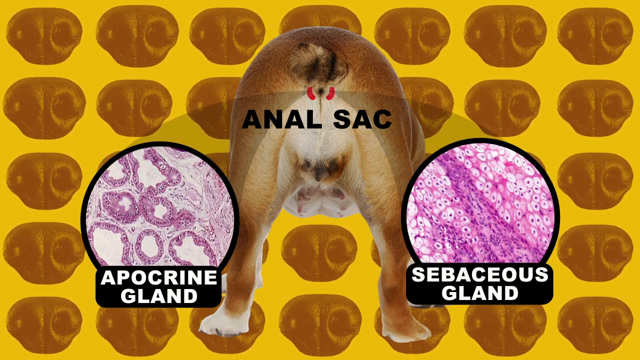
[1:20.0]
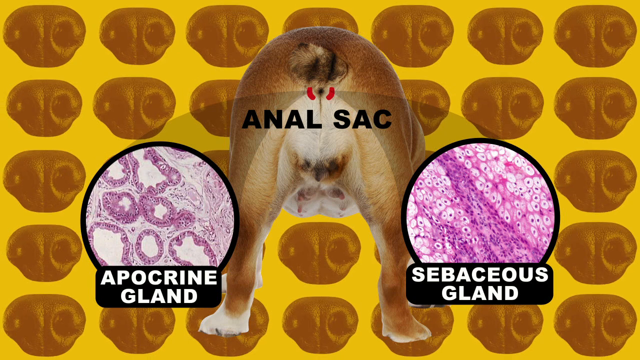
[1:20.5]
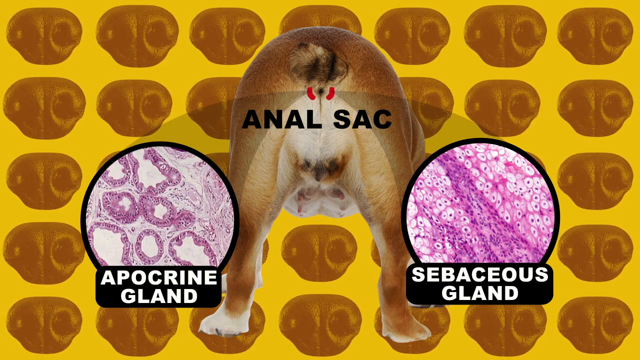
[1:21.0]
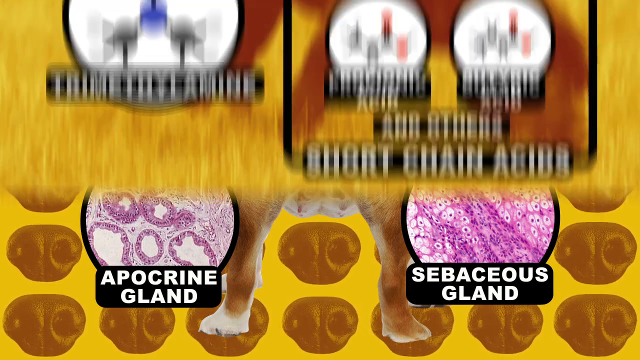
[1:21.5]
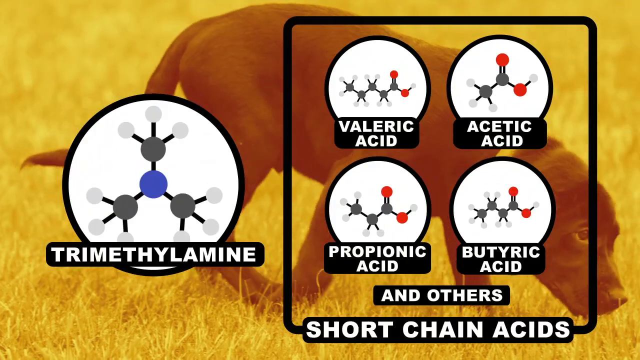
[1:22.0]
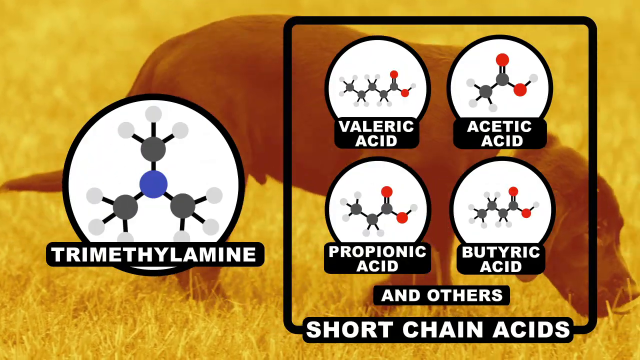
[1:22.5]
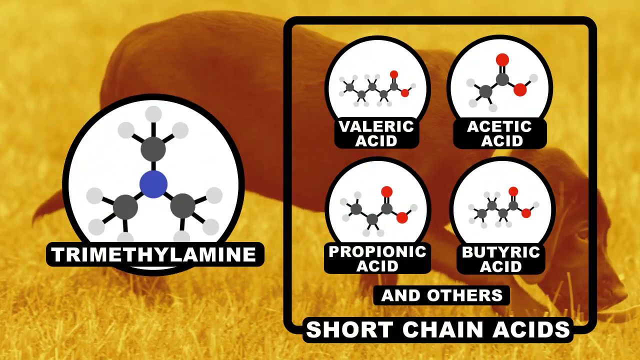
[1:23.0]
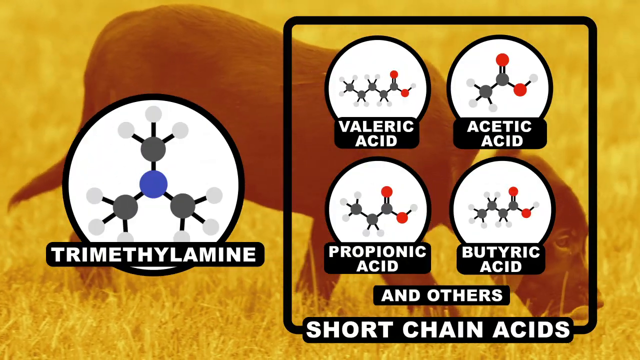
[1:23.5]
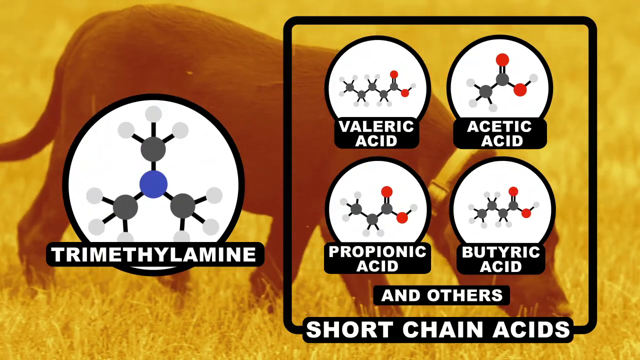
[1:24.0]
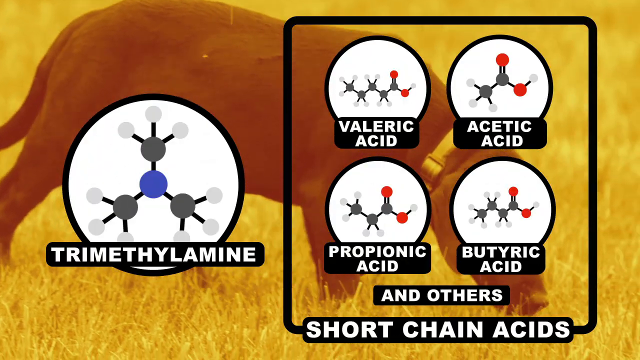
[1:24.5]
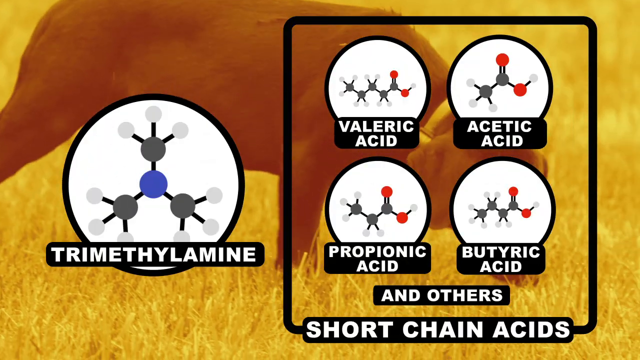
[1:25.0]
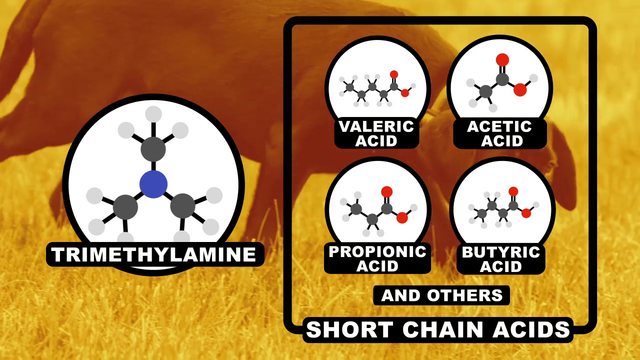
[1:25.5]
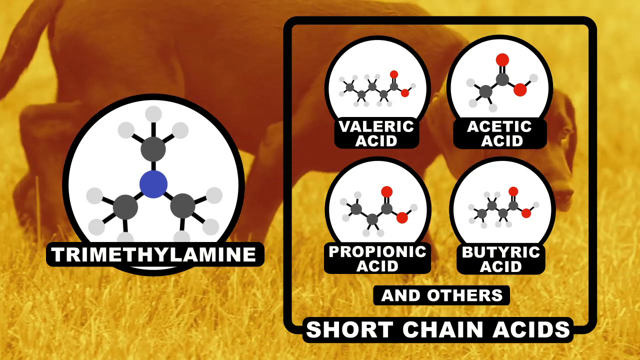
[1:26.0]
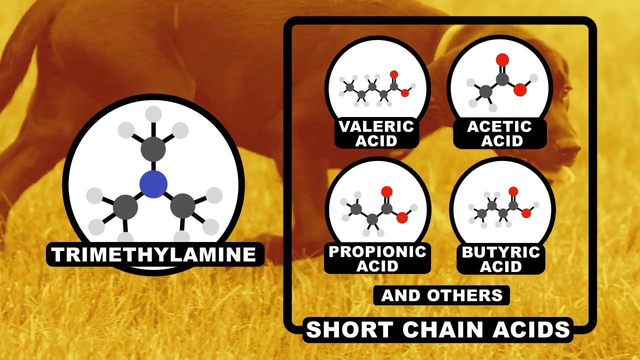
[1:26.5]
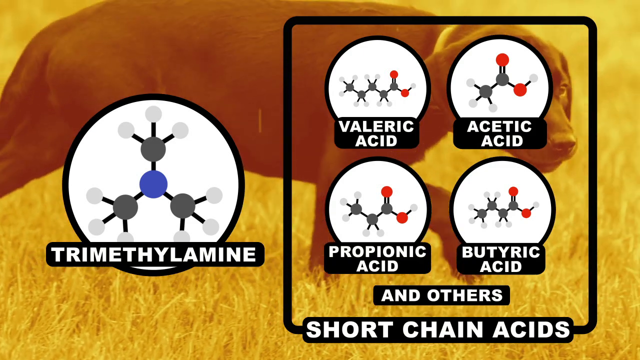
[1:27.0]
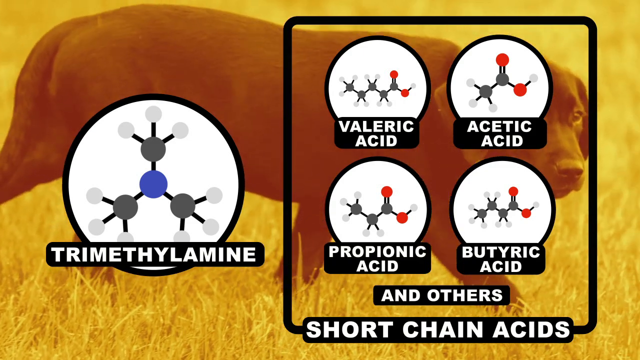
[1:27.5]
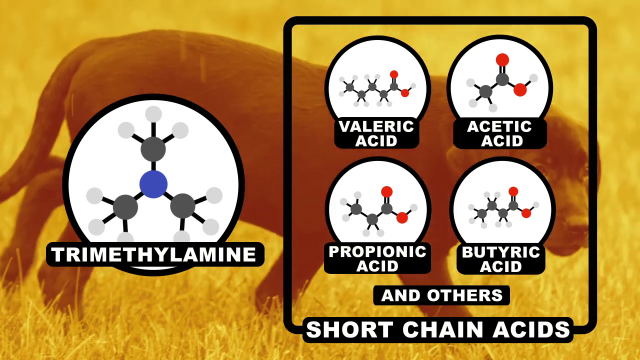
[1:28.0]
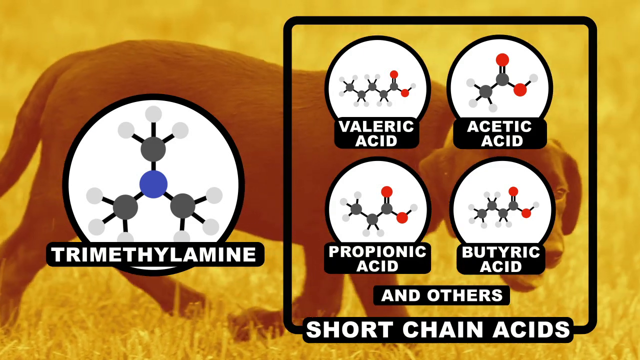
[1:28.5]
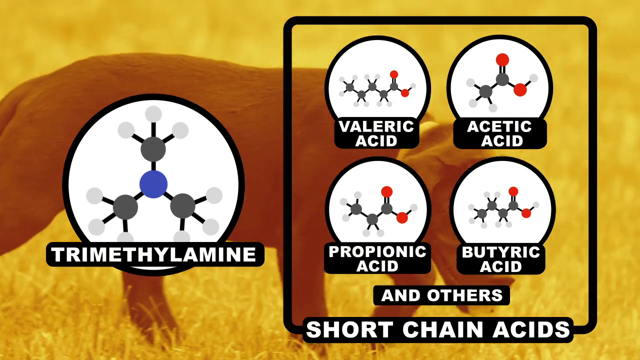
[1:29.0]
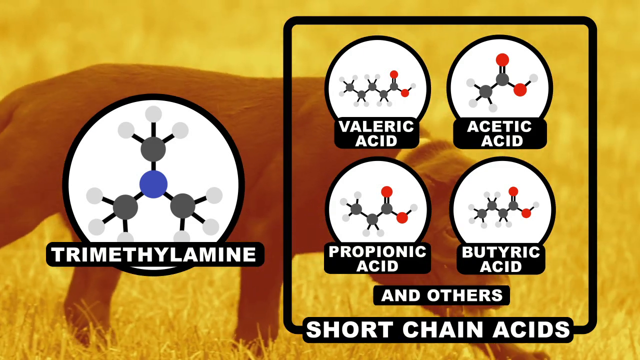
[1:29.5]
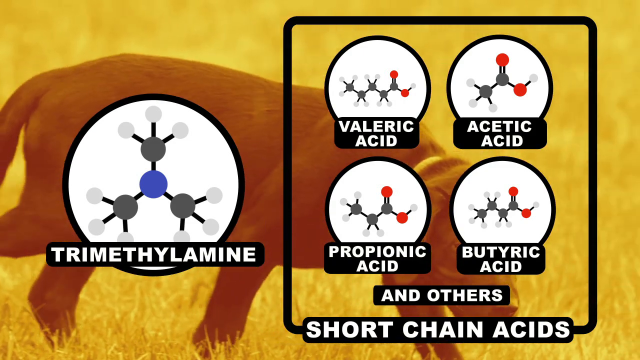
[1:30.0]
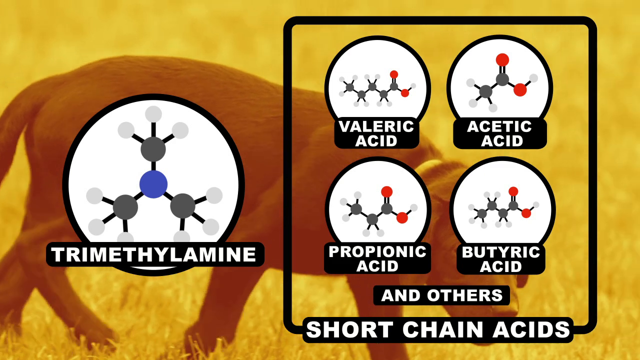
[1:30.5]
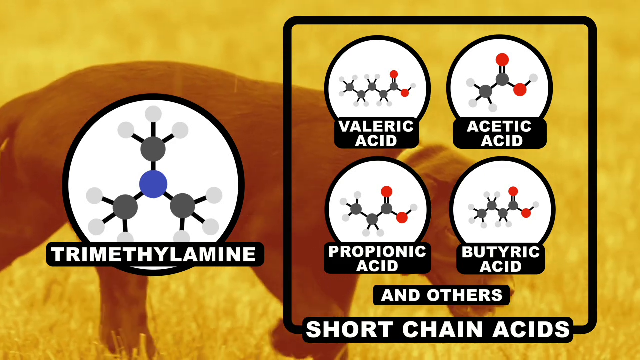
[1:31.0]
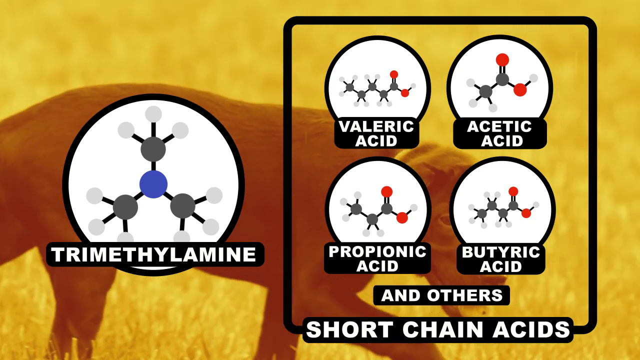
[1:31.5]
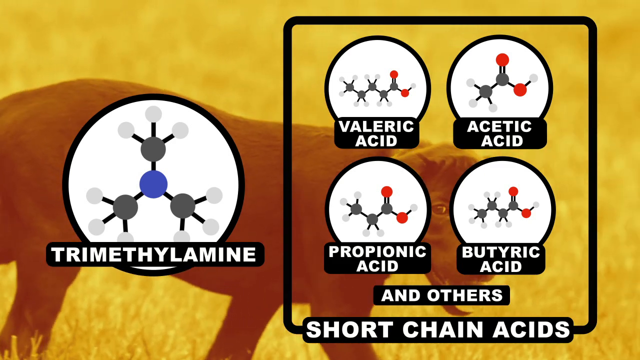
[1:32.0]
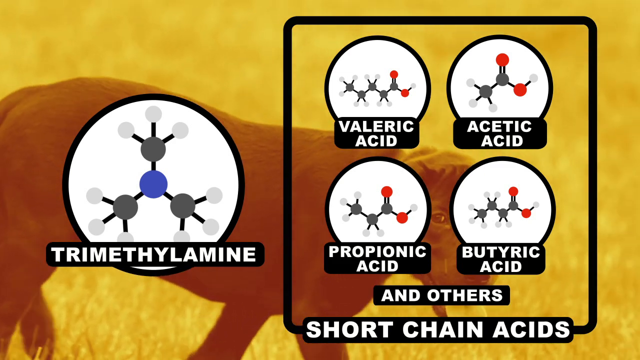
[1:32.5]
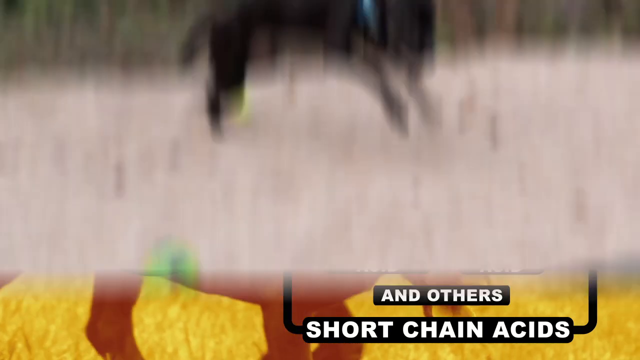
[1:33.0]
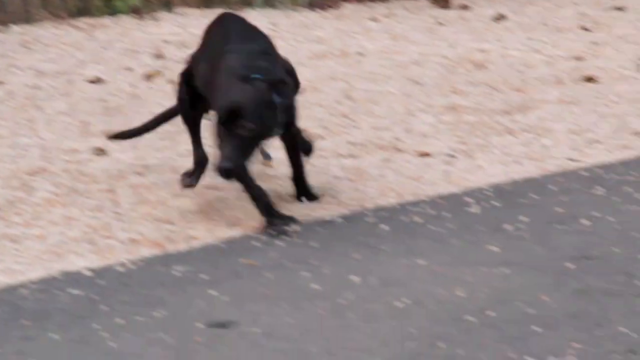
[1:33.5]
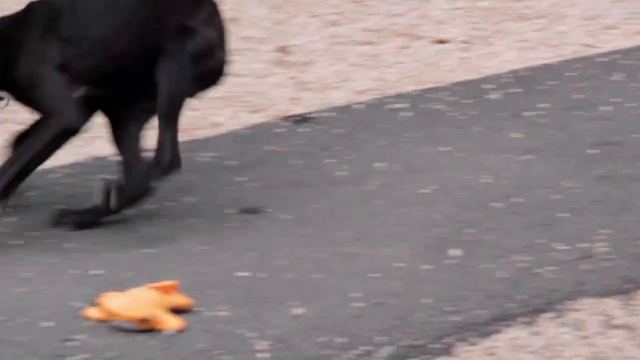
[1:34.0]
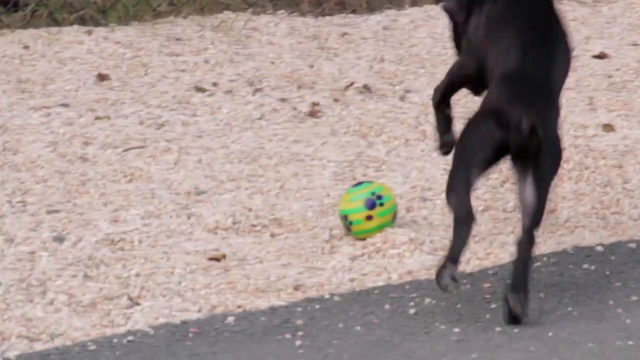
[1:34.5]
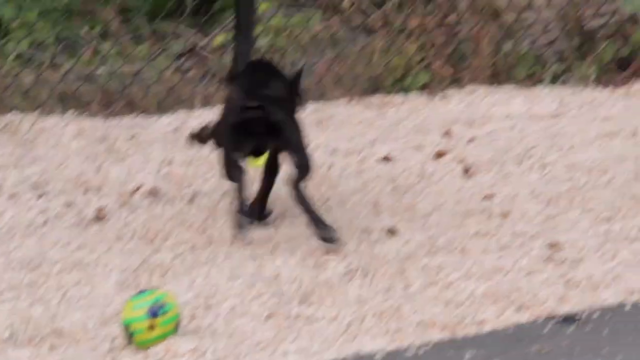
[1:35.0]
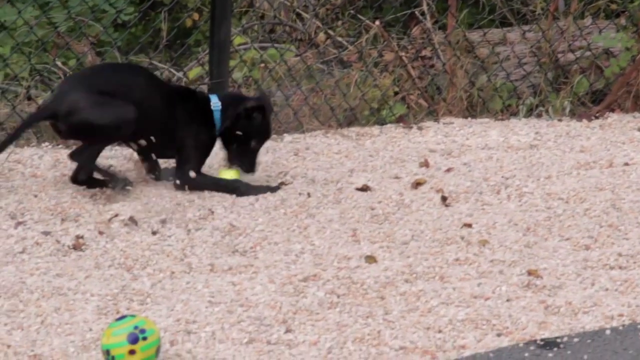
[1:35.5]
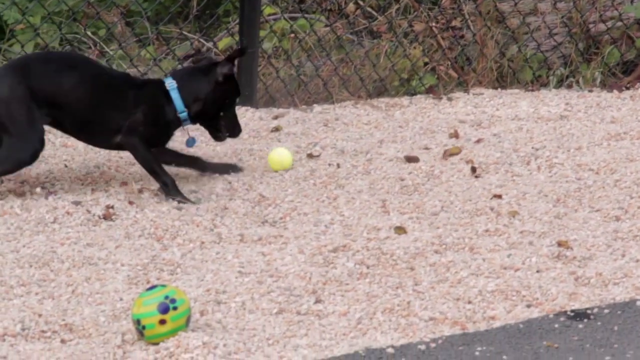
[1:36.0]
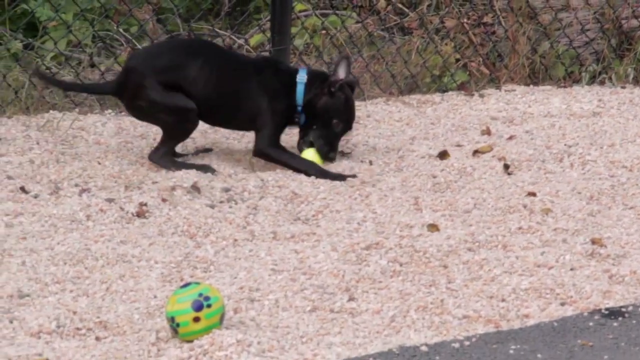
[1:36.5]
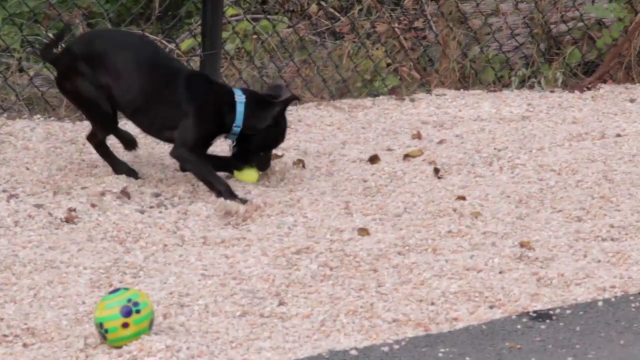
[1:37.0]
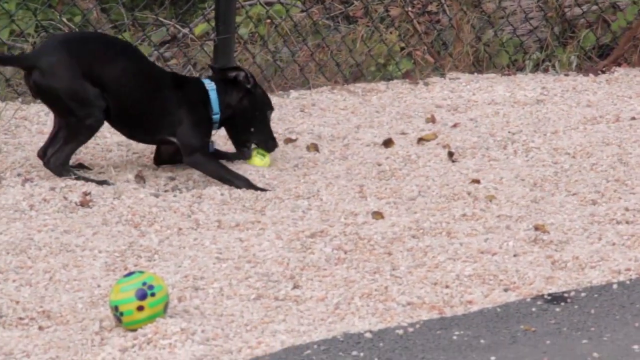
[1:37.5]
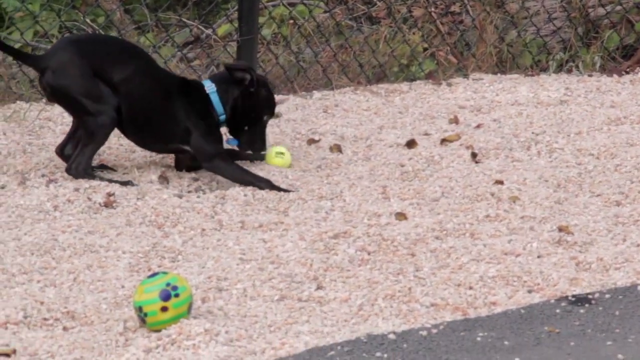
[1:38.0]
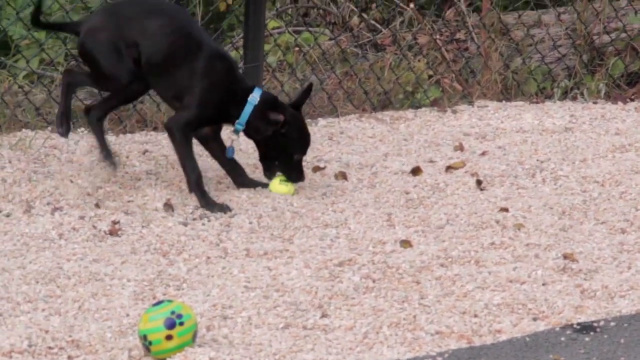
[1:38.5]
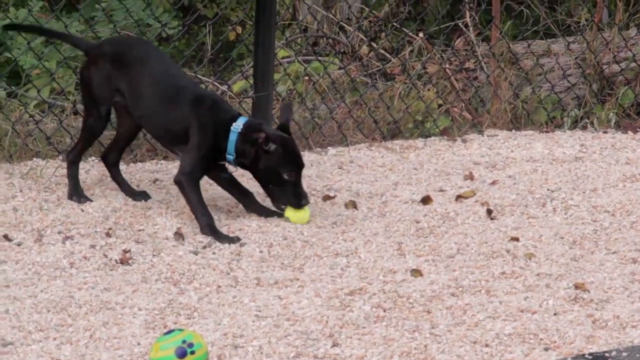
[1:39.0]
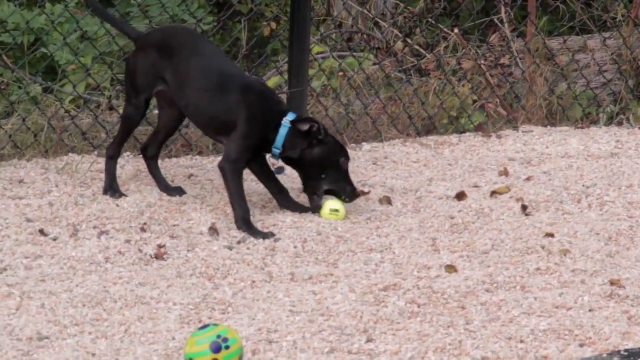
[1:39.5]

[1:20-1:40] A screen shows the names of different chemicals, among them butyric acid and propionic acid. The video then shows a dog in a field walking along and sniffing the ground, as if following a scent.